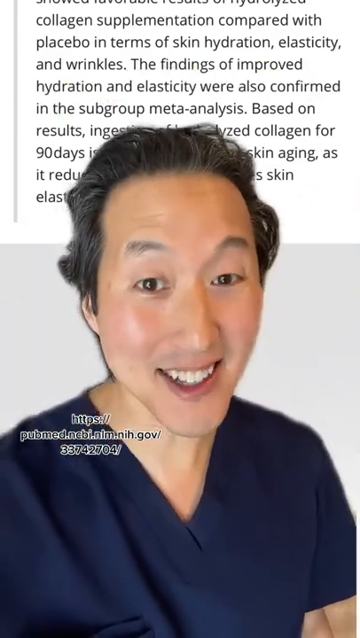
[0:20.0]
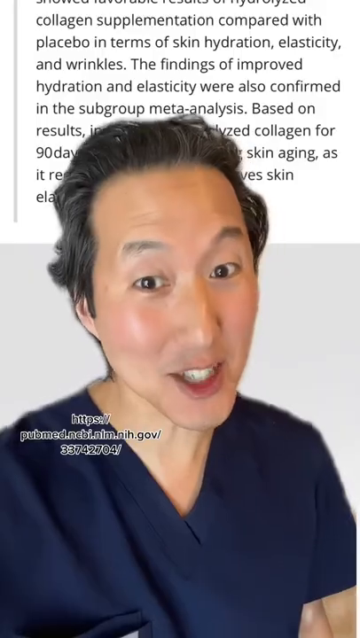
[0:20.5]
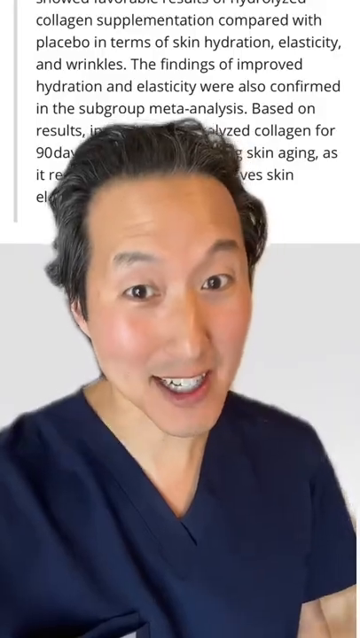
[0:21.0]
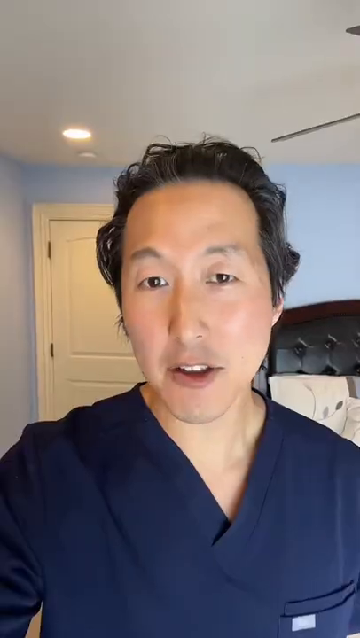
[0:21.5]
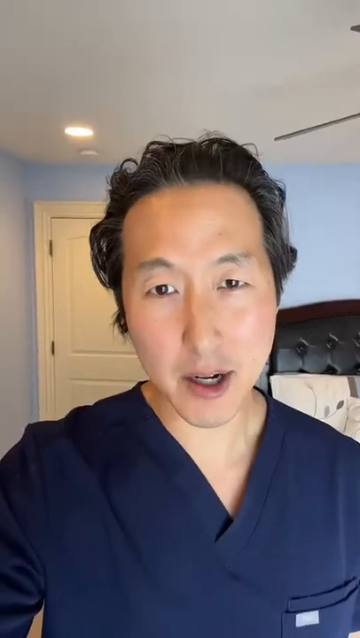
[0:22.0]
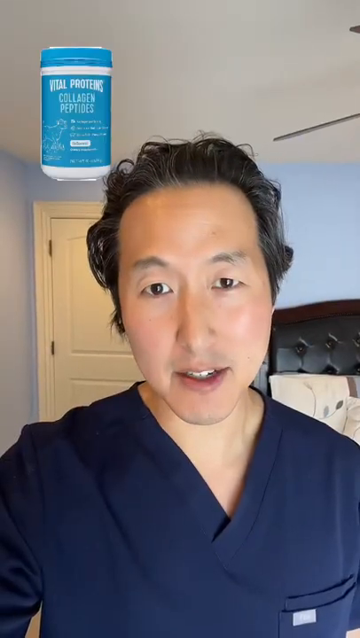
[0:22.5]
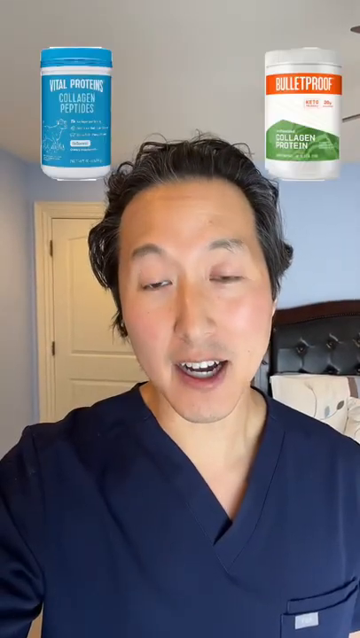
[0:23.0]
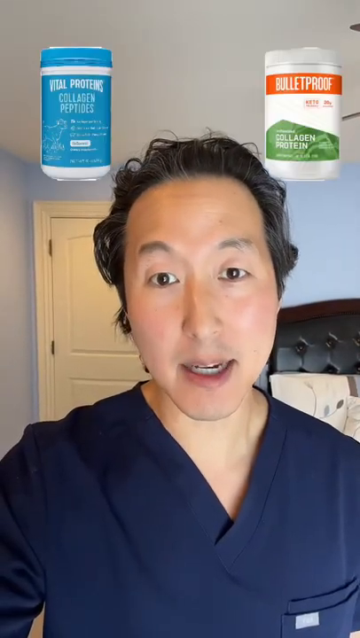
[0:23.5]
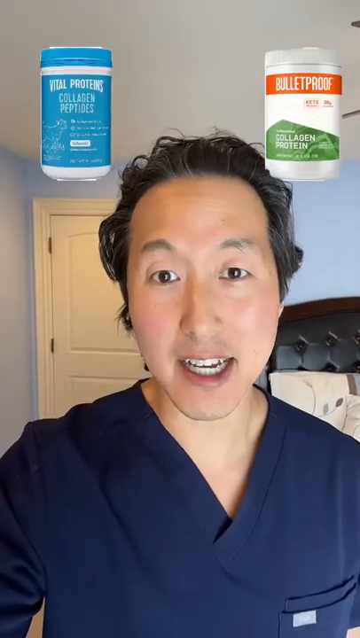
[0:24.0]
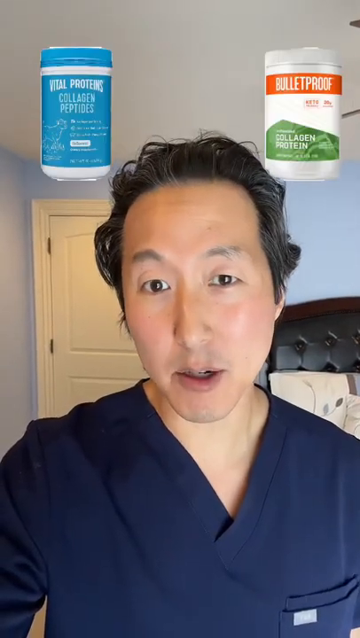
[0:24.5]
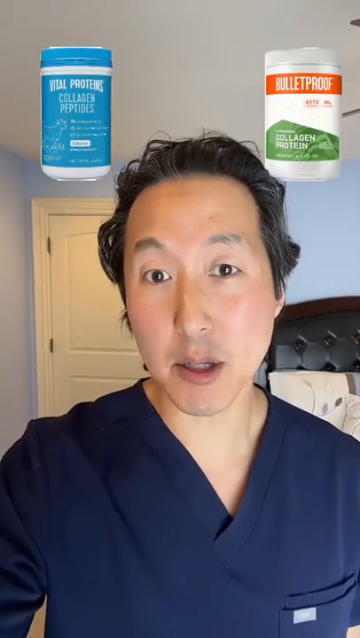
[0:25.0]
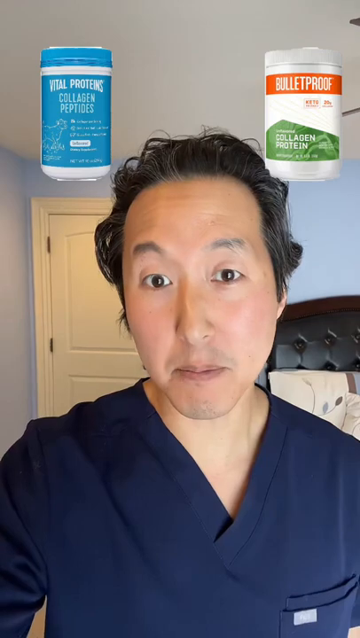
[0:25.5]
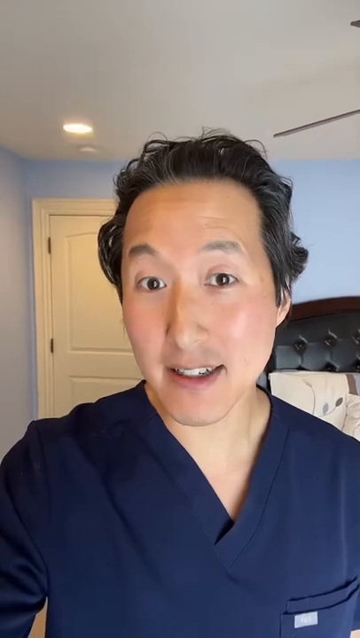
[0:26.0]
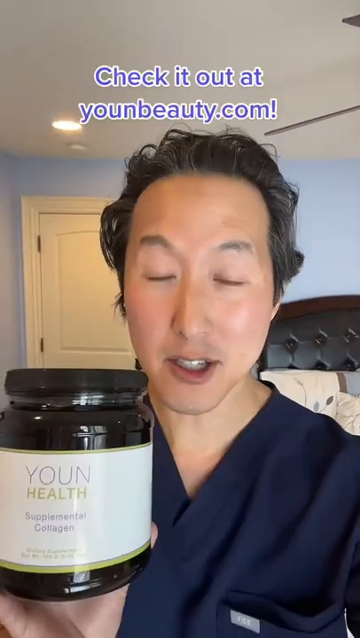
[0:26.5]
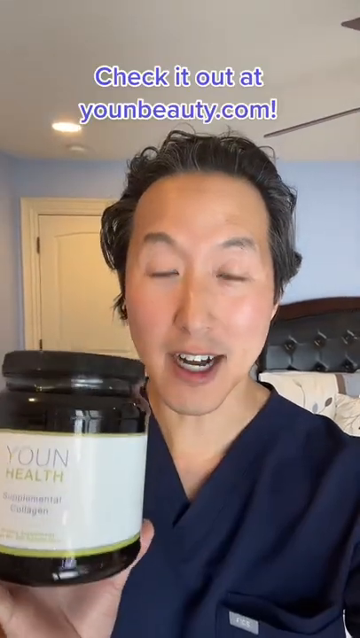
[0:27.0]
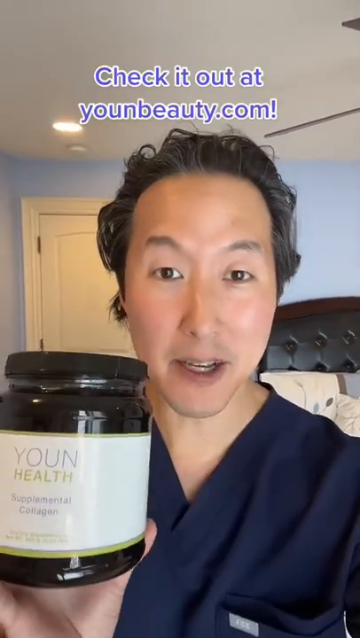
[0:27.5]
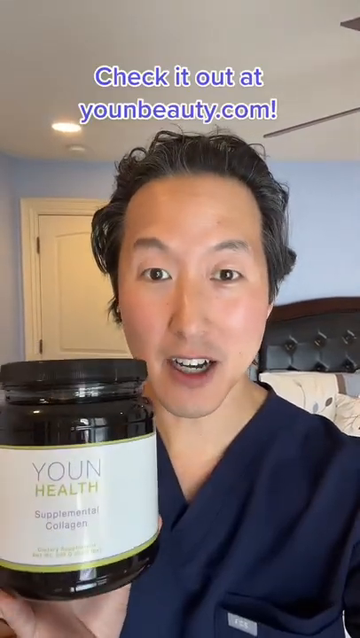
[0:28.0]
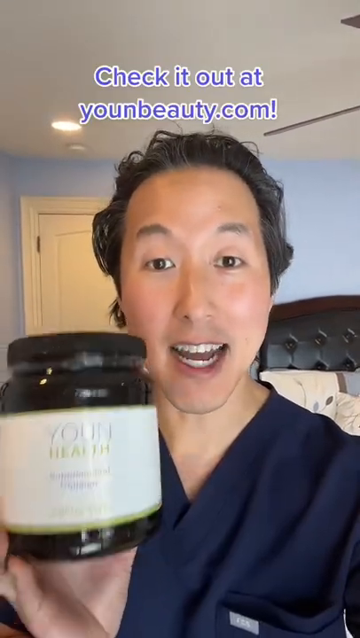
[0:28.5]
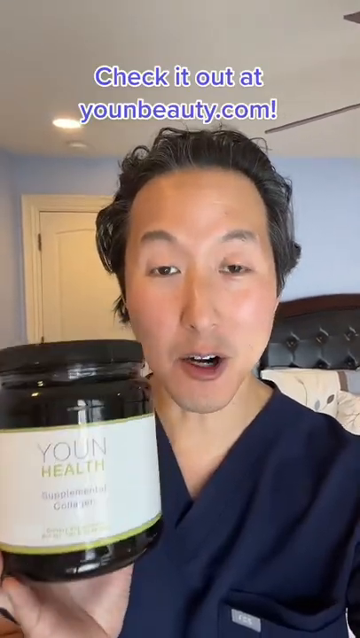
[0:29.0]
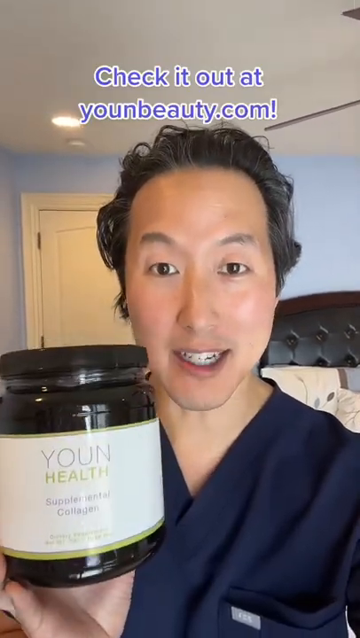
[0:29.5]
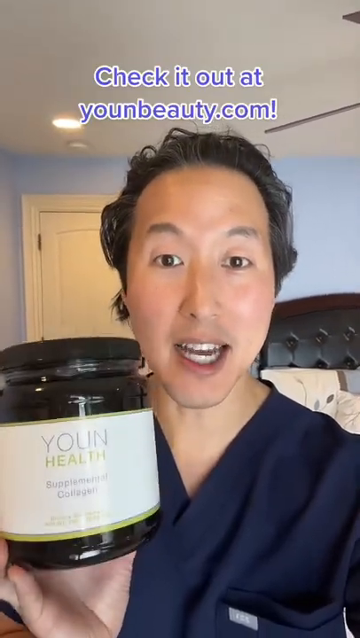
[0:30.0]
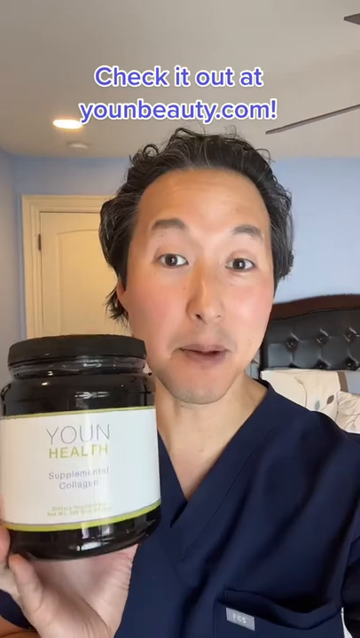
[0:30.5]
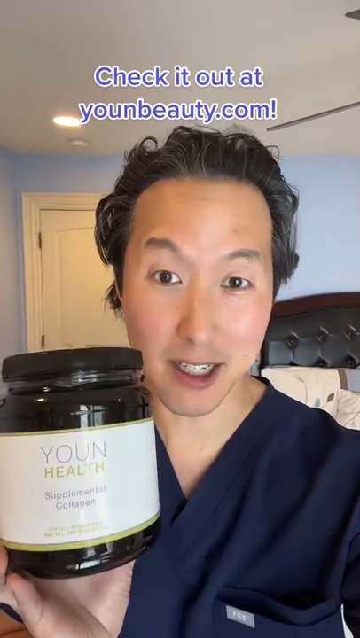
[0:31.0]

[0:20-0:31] The doctor continues with the material on hydrolyzed collagen and its effects on skin aging. Two different products that contain collagen protein are shown, one from Vital Proteins and one from Bulletproof. The doctor then holds up a collagen supplement he has, and text reads "check it out on younbeauty.com."